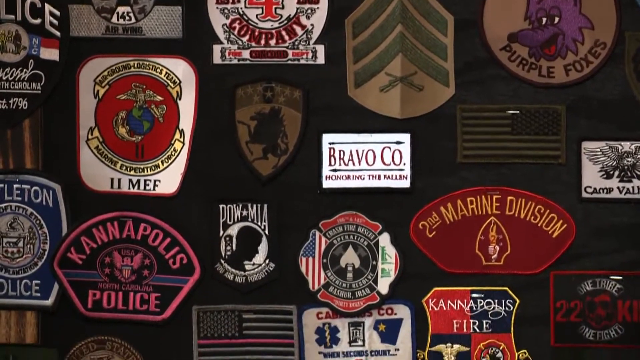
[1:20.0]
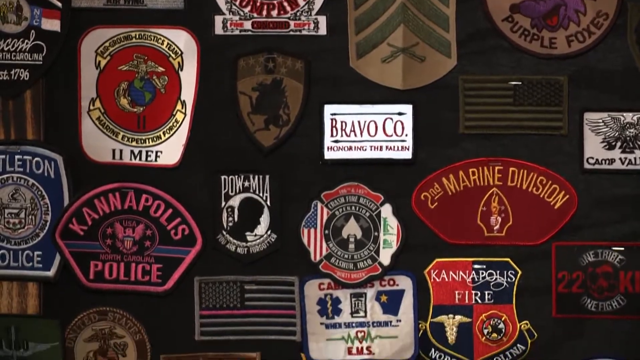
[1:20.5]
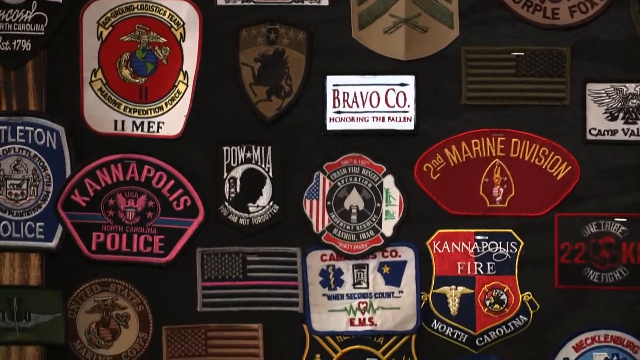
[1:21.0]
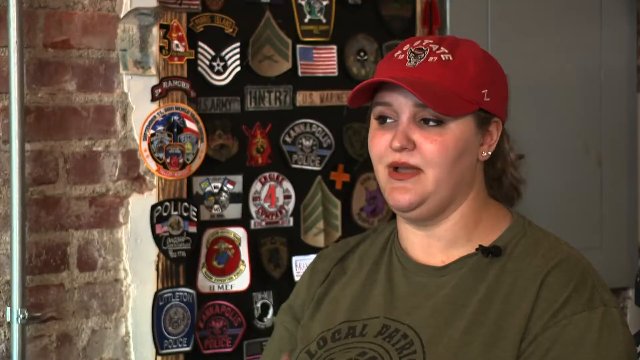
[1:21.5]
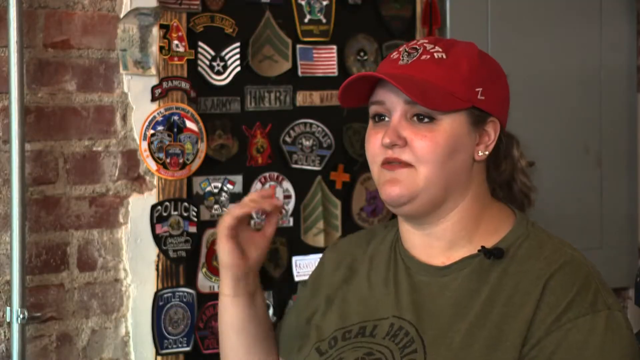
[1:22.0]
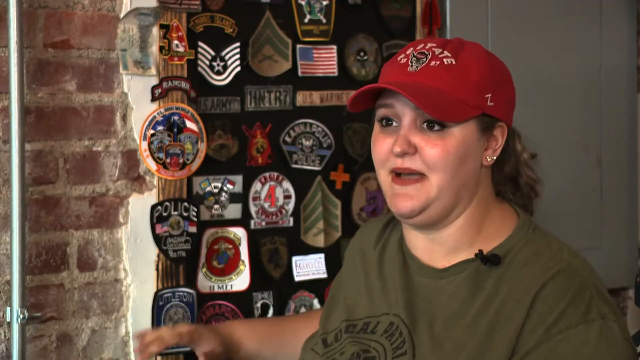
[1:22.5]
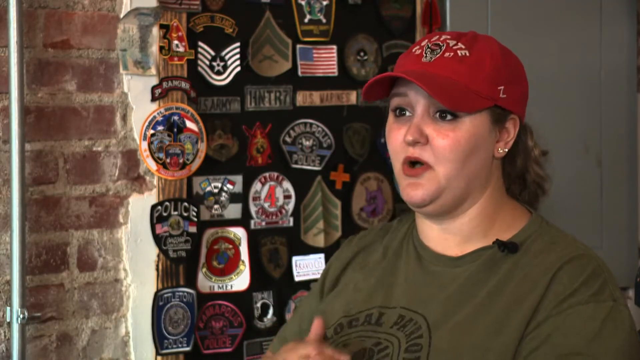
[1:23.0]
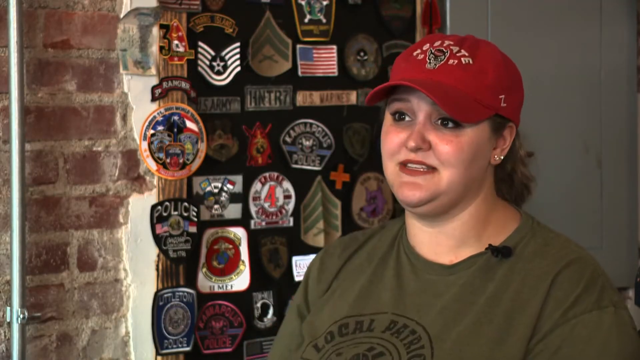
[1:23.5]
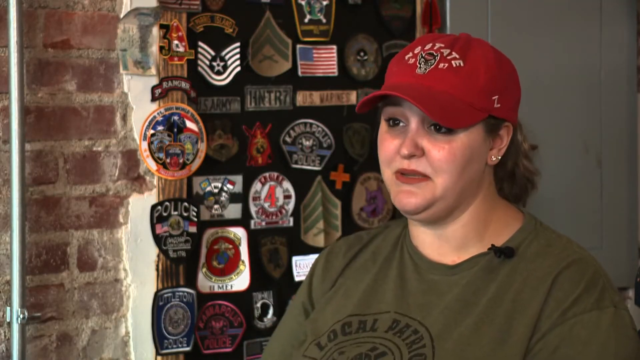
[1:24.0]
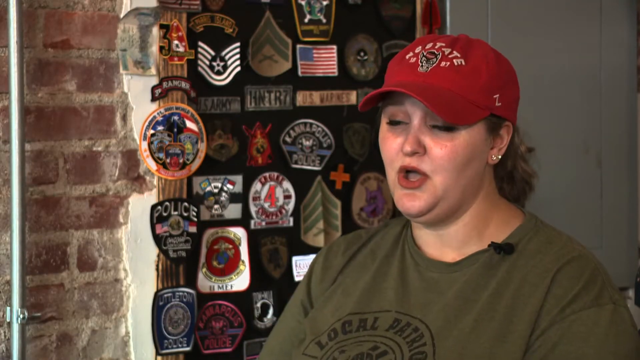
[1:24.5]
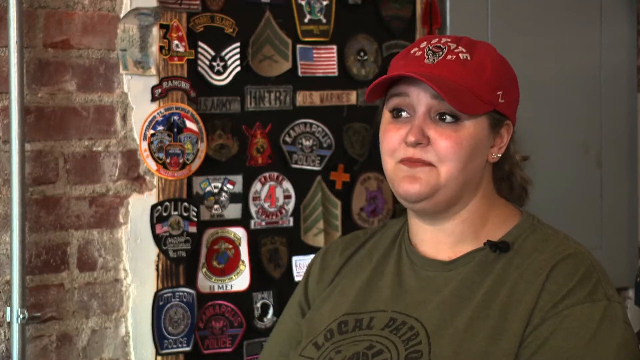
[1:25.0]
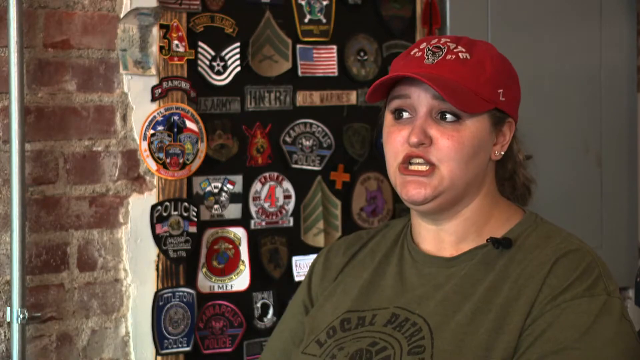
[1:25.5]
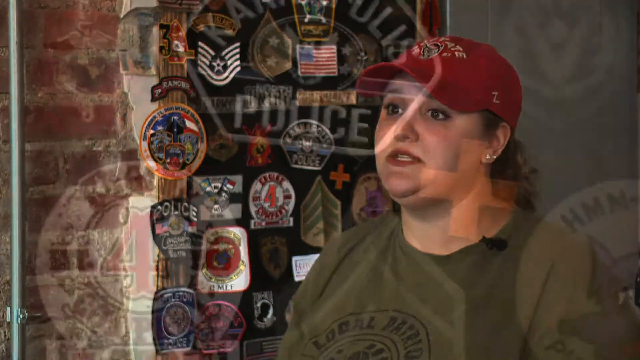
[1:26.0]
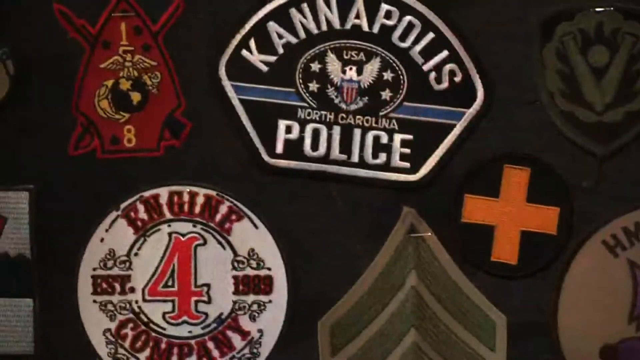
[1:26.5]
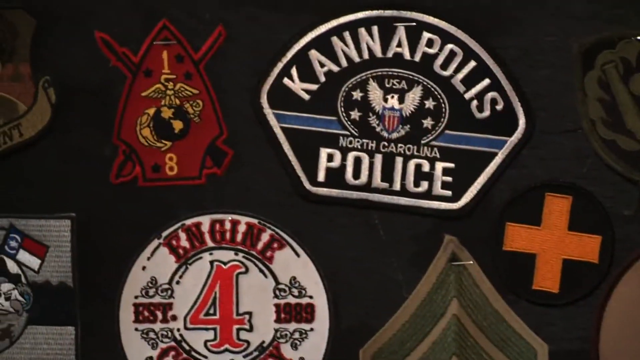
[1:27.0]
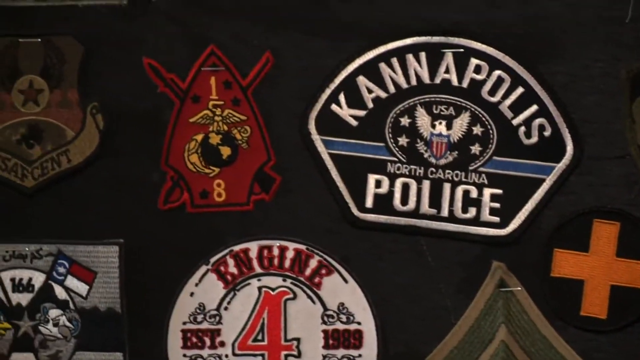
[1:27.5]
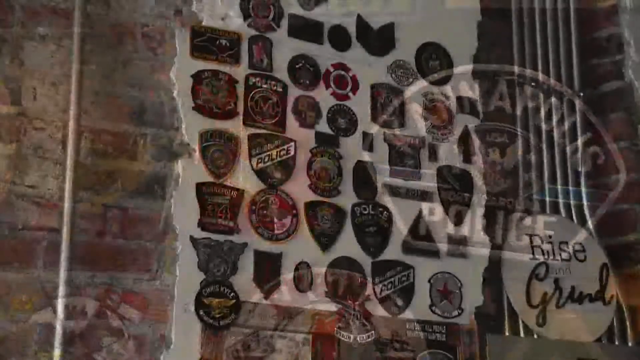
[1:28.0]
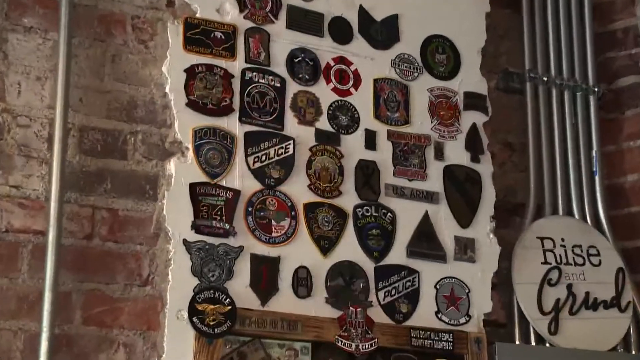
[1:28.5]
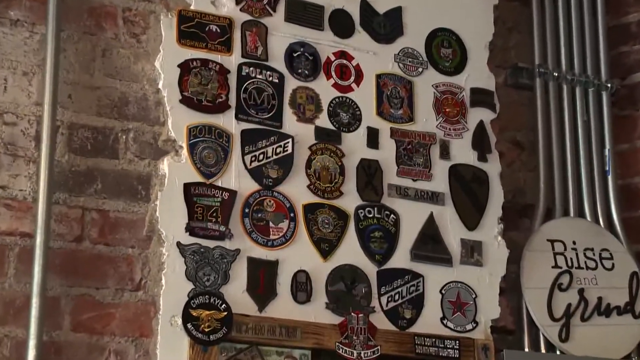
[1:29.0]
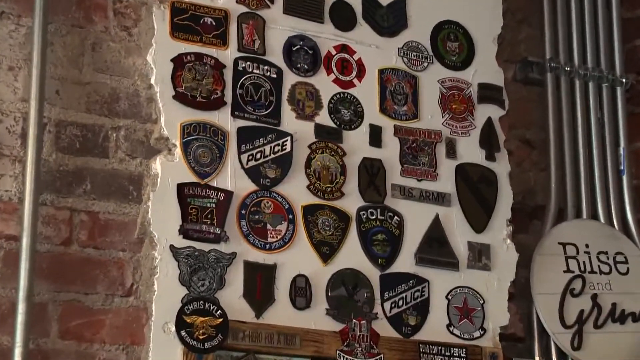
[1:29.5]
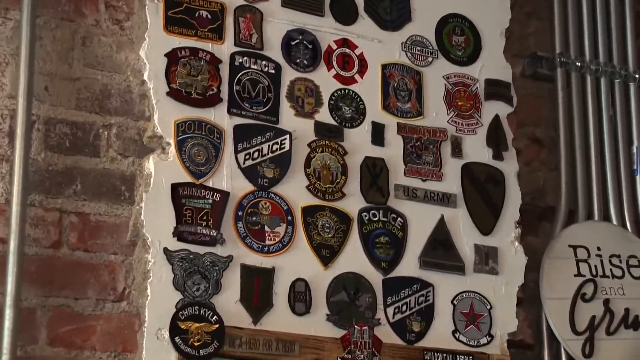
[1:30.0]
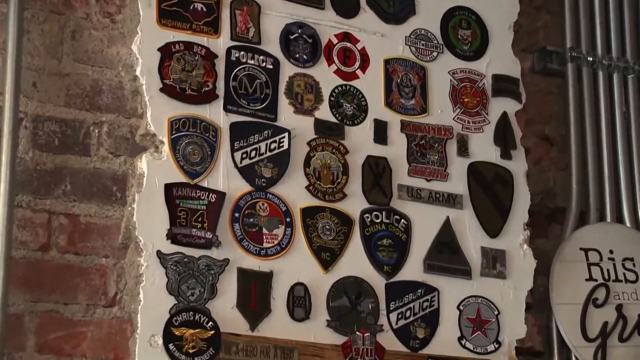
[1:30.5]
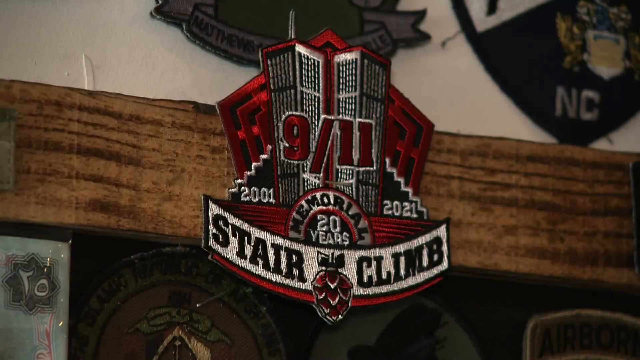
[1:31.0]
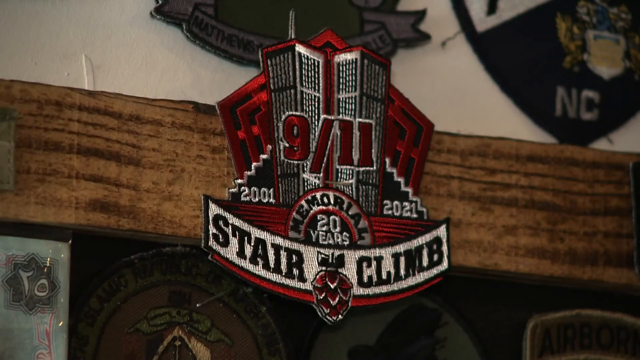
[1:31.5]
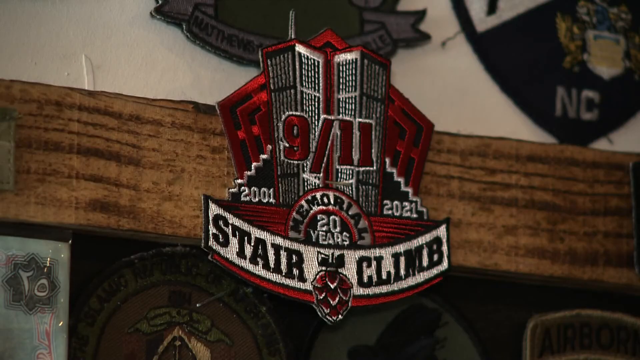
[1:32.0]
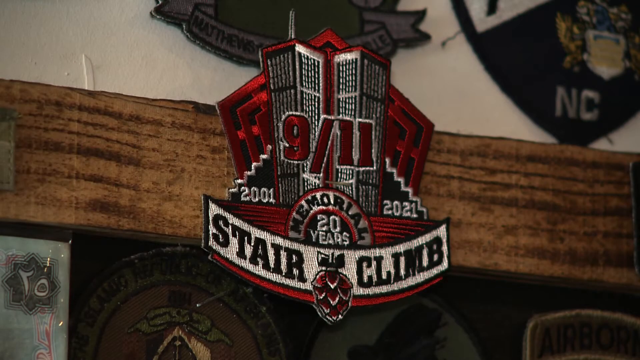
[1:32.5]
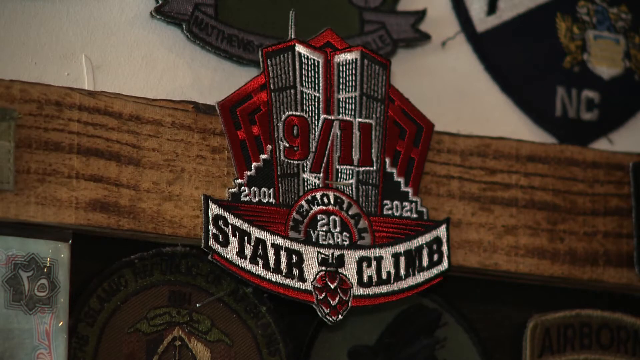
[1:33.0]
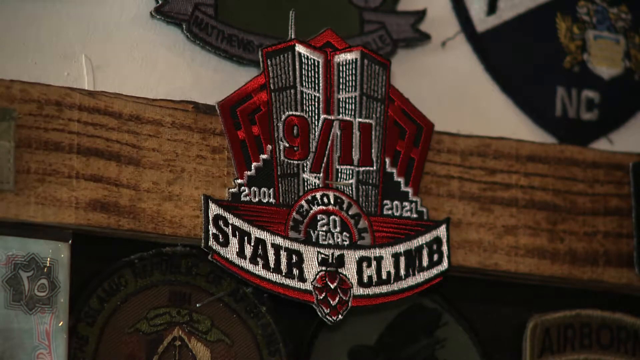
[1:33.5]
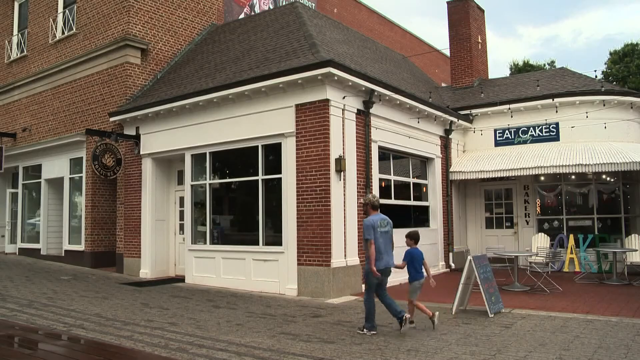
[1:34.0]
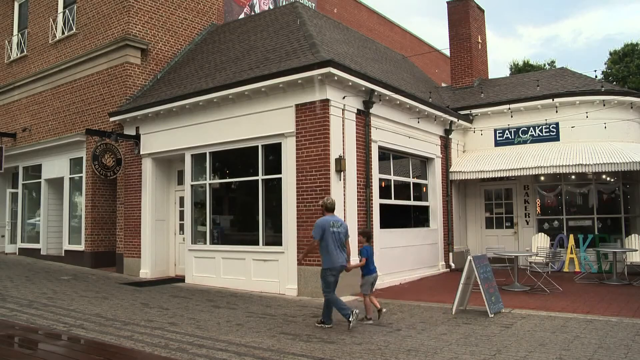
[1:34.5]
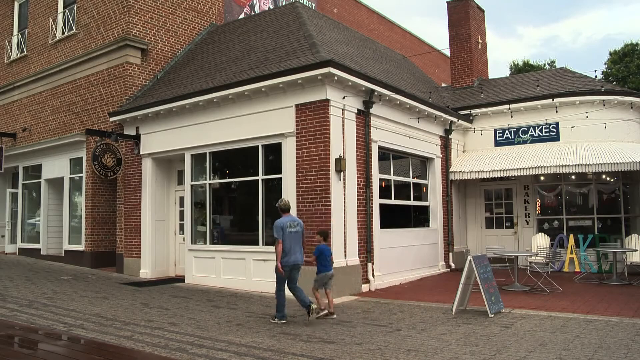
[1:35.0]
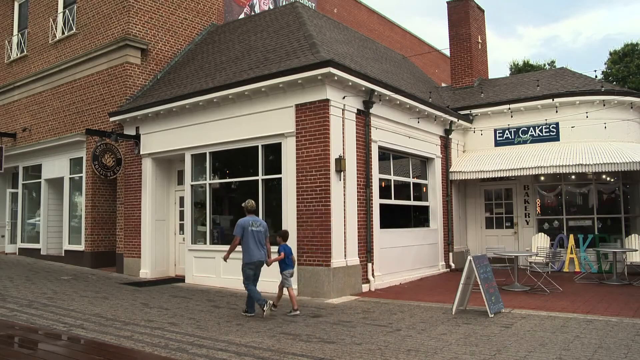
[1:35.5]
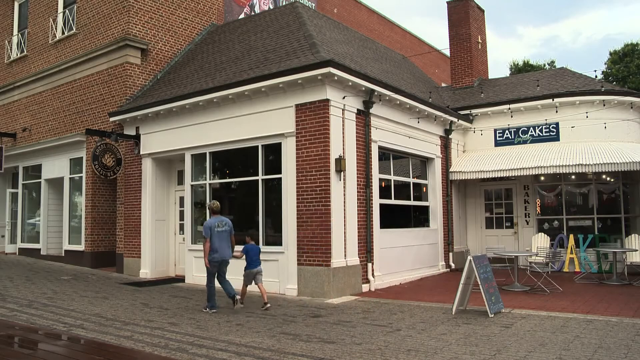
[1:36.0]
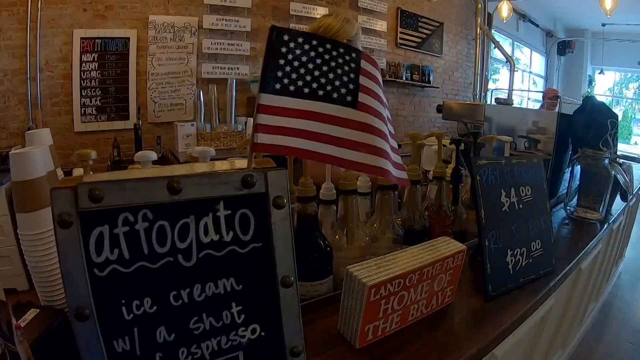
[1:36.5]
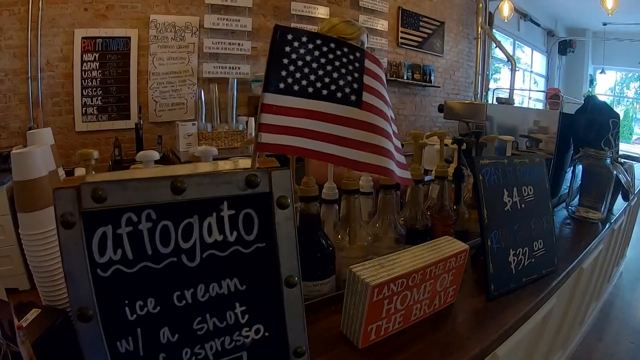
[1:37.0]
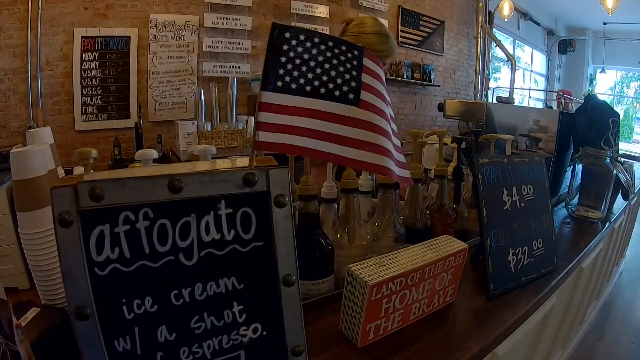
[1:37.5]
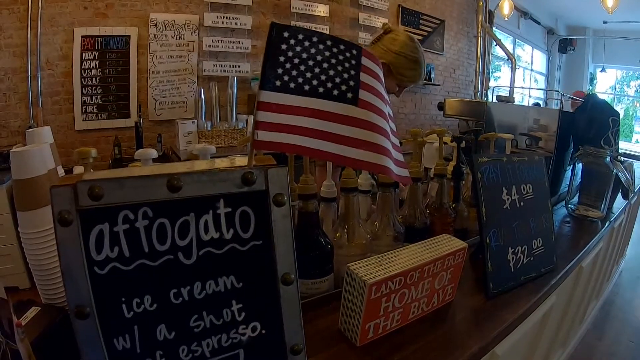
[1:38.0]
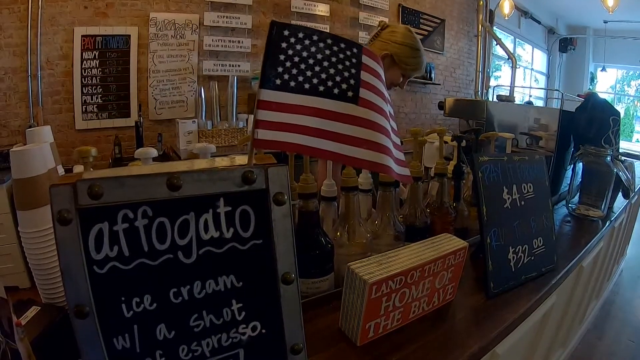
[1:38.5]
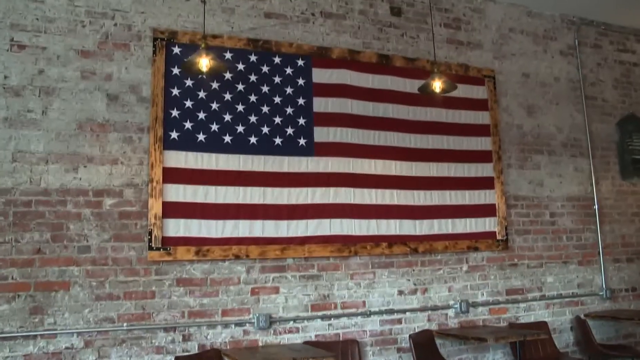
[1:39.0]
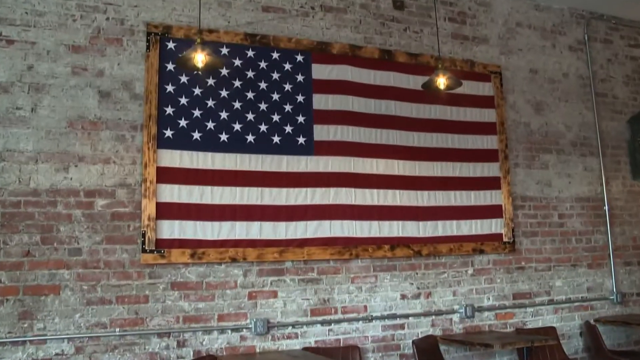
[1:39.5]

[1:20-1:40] The badges are shown more clearly, including ones reading "Kanyapolis Police", "2nd Marine Division" and "Kanyapolis Fire", possibly tributes to the police and fire department. Next to the badges is a small plaque that says "Rise and Grind". Many of the badges appear to be dedicated mainly to the police. A close-up shows one that reads "Stair Climb 9-11 Memorial 20 year". Near the end, the outside of the coffee shop is shown; it appears small and quaint. Something attached to the shop reads "Eat Cakes", and it is unclear whether this is the same coffee shop or a separate one. Then there is a close-up view of the massive American flag on the wall opposite the till.